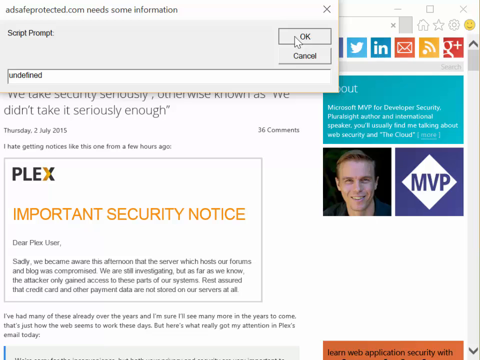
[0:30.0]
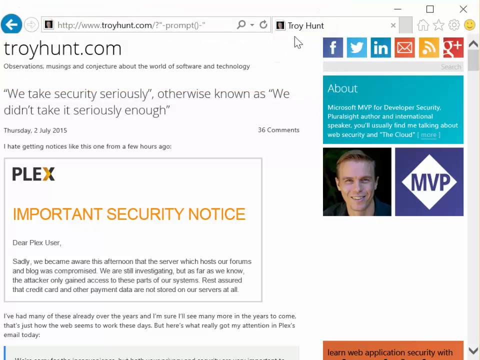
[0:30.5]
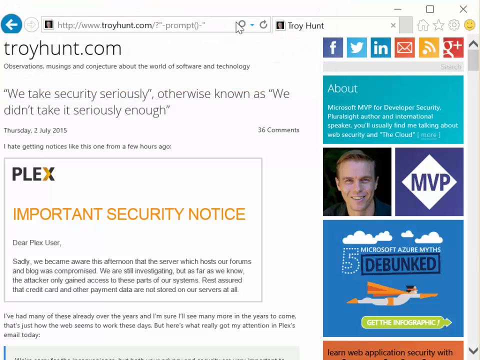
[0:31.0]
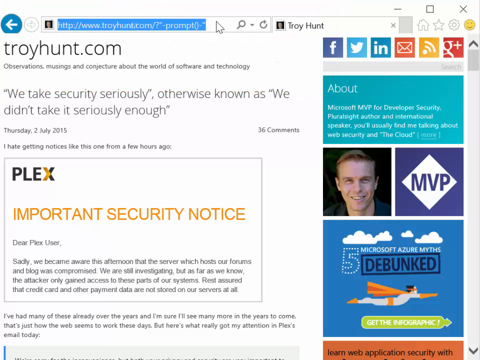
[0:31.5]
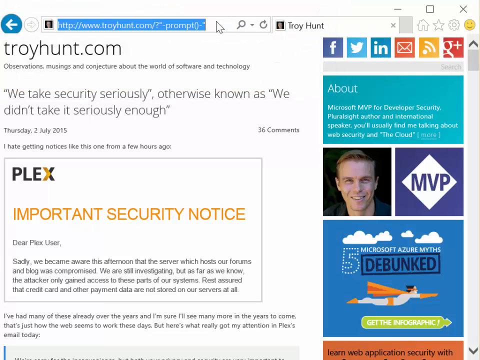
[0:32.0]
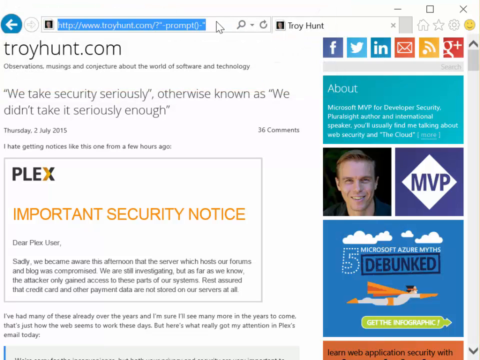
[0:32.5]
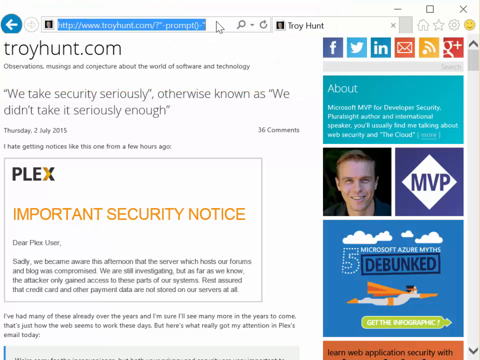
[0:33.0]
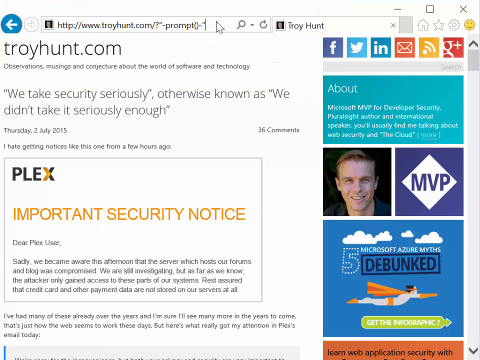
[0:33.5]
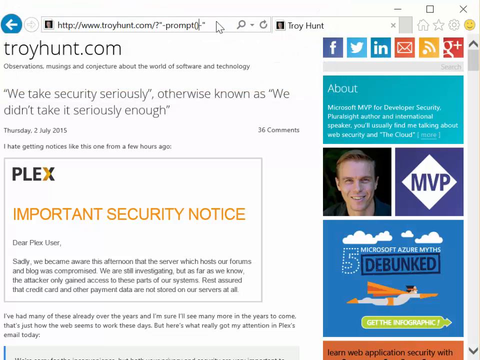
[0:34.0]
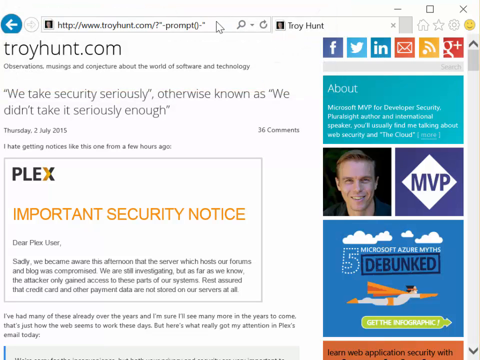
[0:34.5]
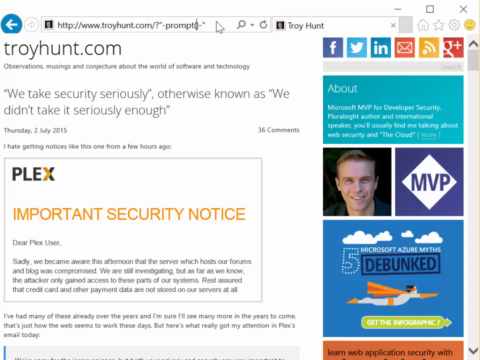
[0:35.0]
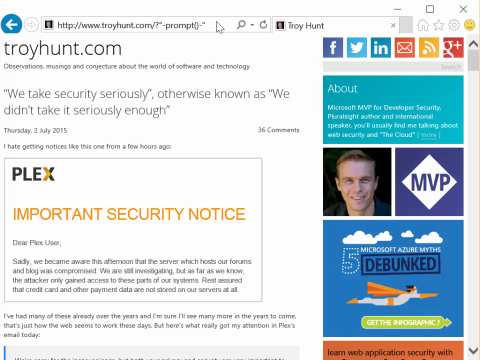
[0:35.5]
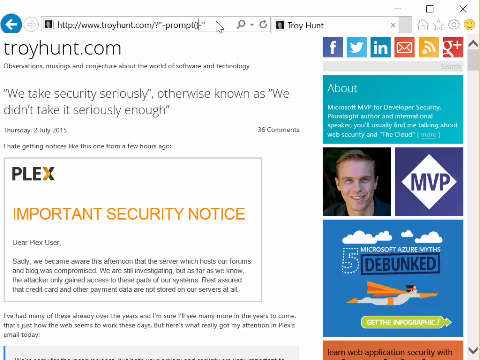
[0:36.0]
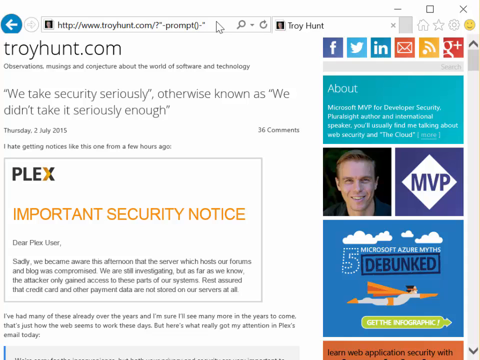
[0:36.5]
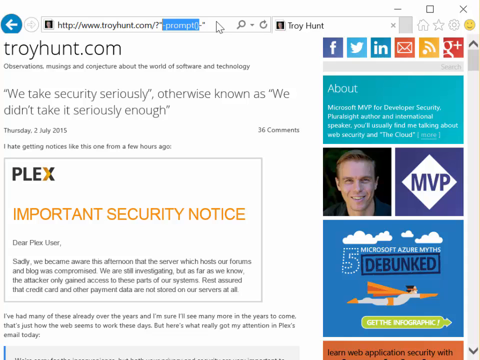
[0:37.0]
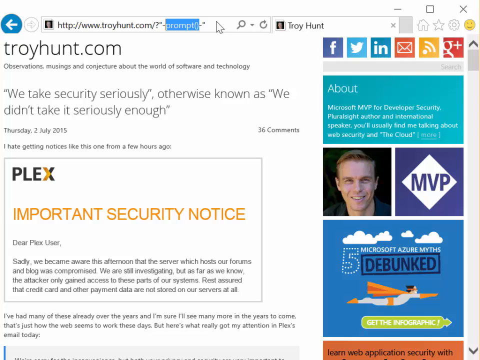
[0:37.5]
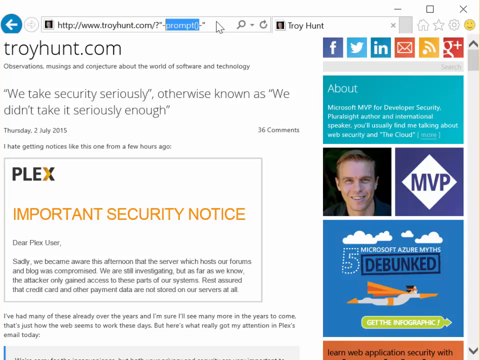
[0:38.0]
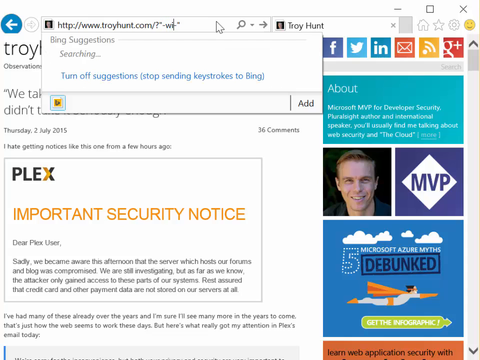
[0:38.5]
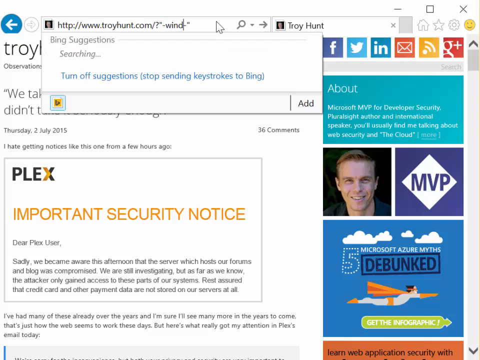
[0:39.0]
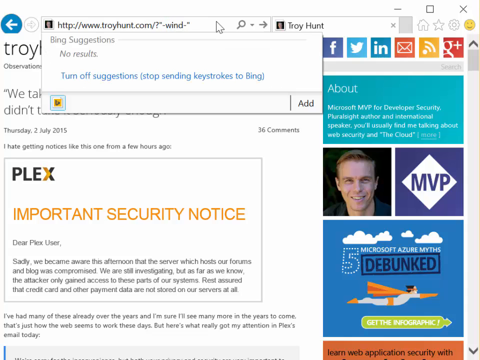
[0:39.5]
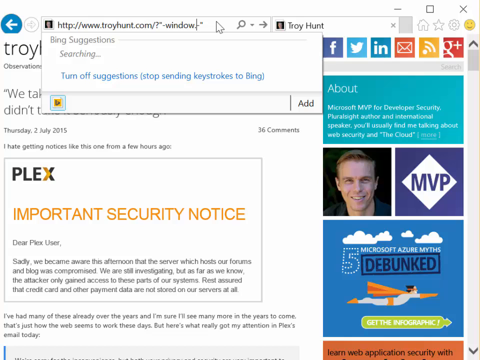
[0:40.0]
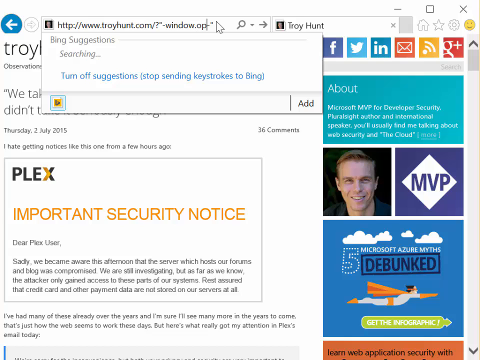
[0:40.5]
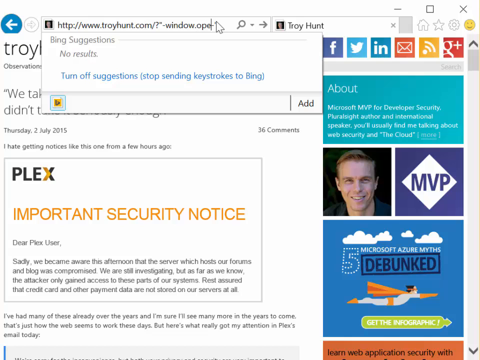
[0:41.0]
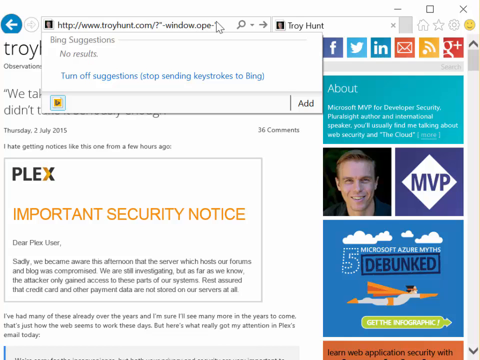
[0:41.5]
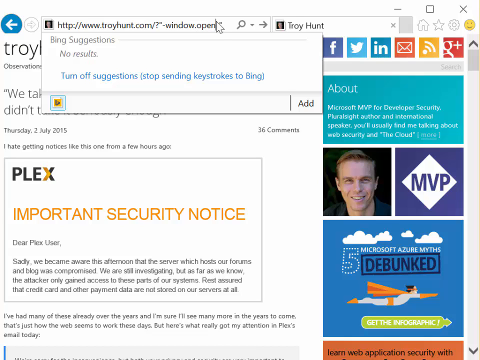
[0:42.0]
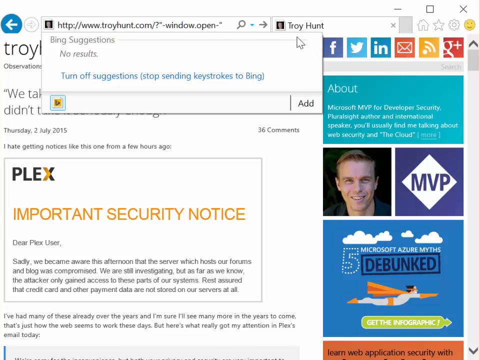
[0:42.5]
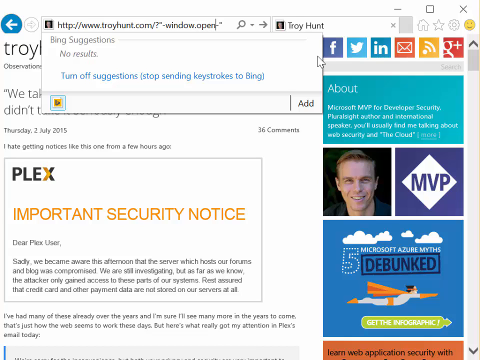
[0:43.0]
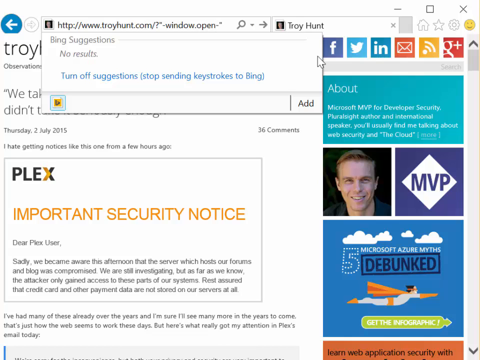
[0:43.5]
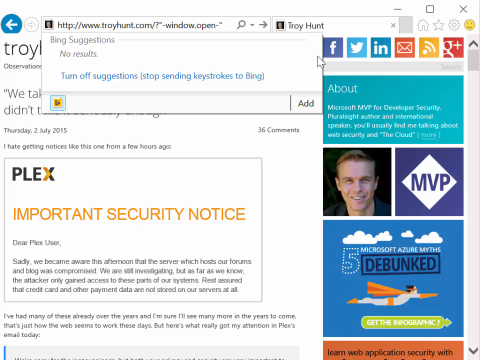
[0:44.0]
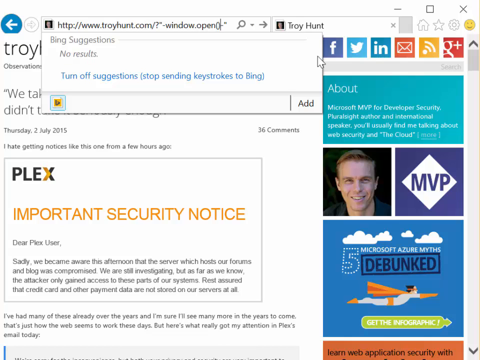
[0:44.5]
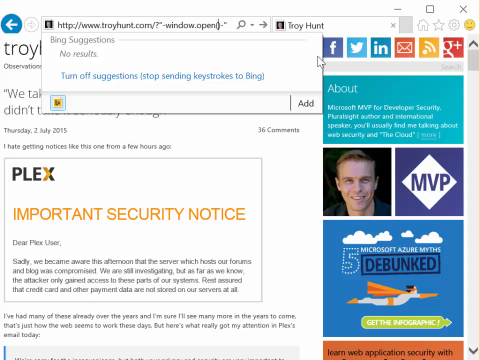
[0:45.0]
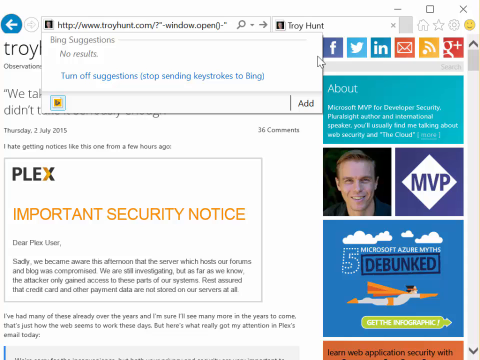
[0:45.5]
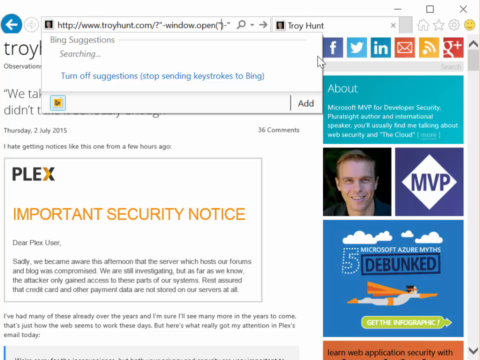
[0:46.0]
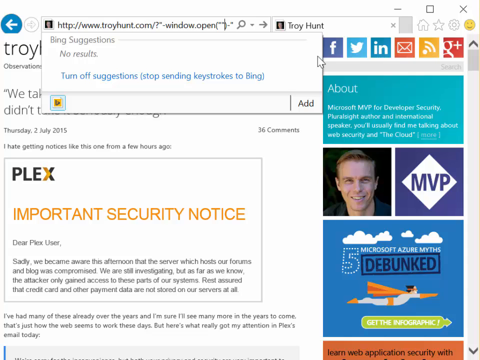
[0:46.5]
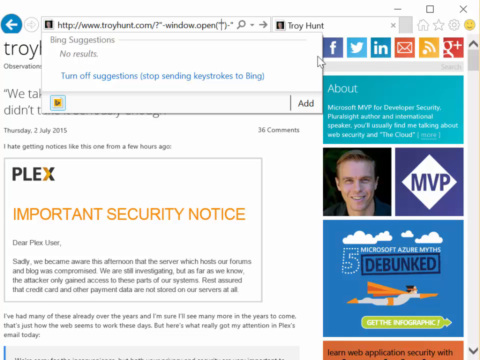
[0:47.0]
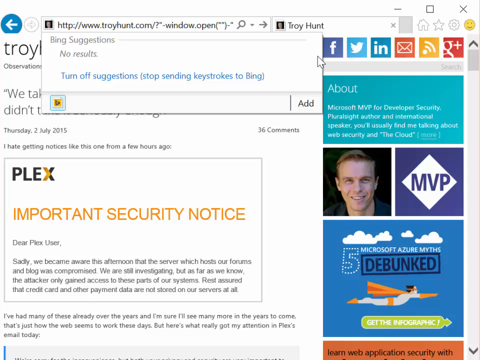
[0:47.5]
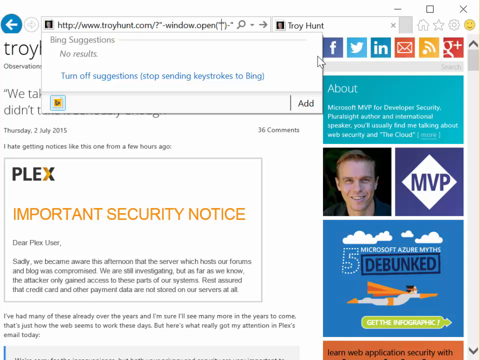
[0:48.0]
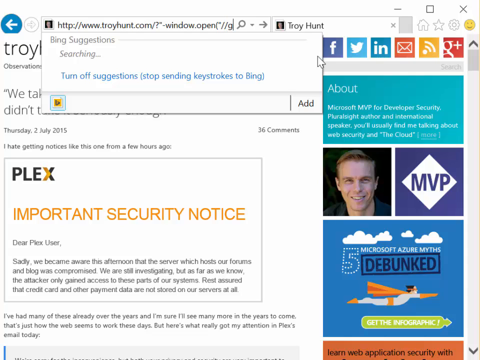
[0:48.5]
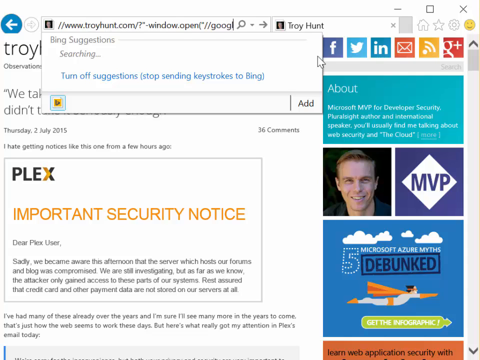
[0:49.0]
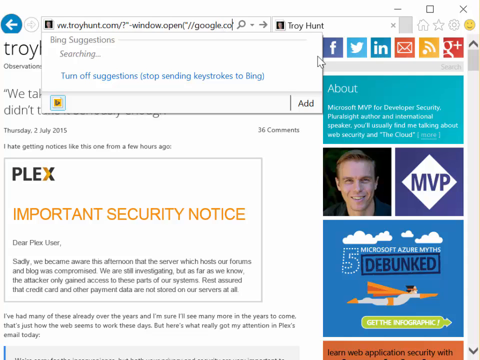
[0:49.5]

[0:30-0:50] The user is still on the TroyHunt.com website. At the top right are typical social media links, including Facebook and Twitter, along with some other links. On the right is an About section with a picture of a younger man with short hair; under About it reads "Microsoft MVP for developer security, plural site author, and international speaker. You'll usually find me talking about web security and the cloud." The user goes back into the address bar, where it says TroyHunt.com, and appears to type in other options, entering "window open" followed by "Google.com" in parentheses. A pop-up window labeled "Script Prompt" appears. The user then highlights what they just typed and types "window.open."